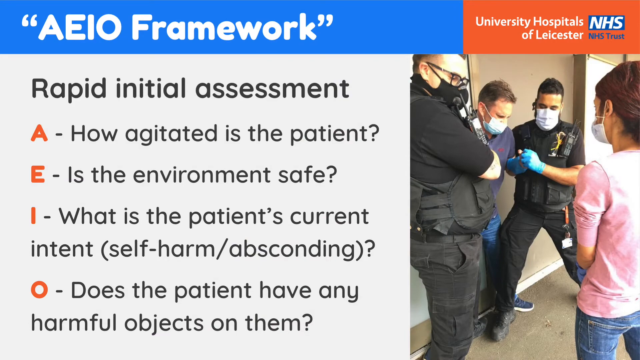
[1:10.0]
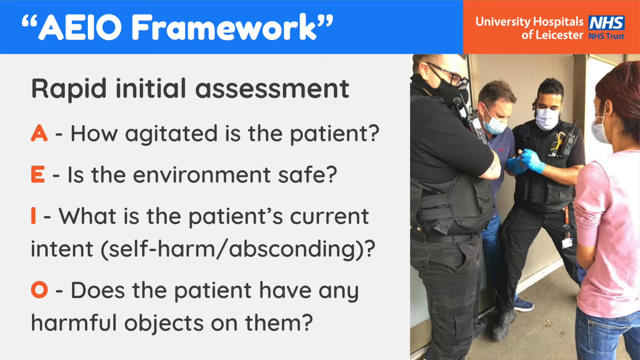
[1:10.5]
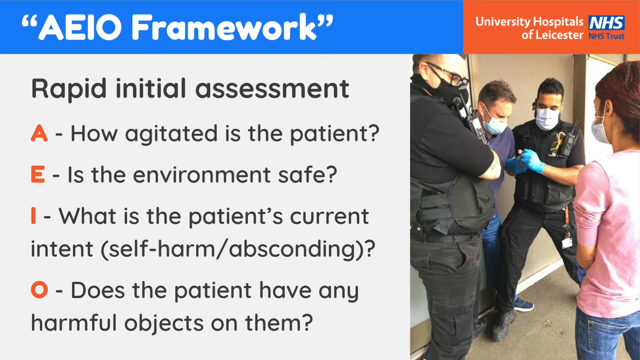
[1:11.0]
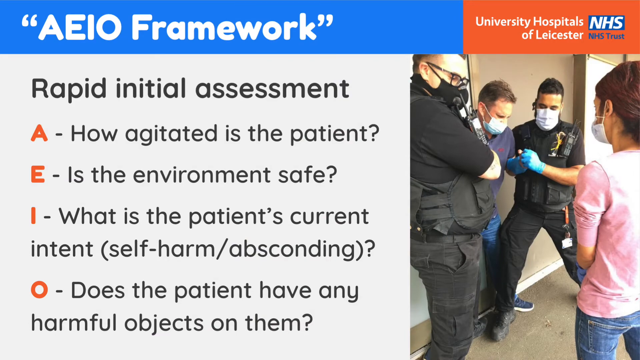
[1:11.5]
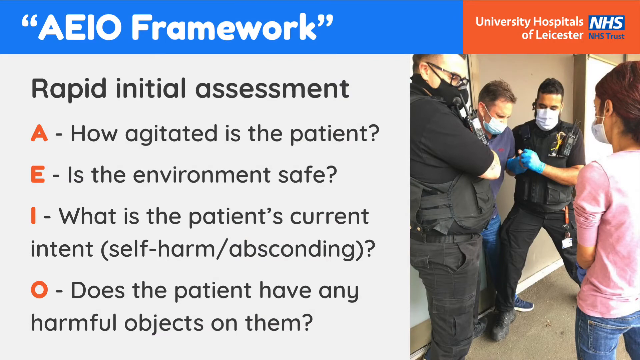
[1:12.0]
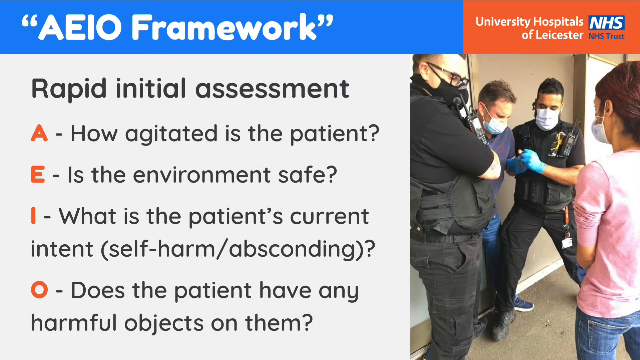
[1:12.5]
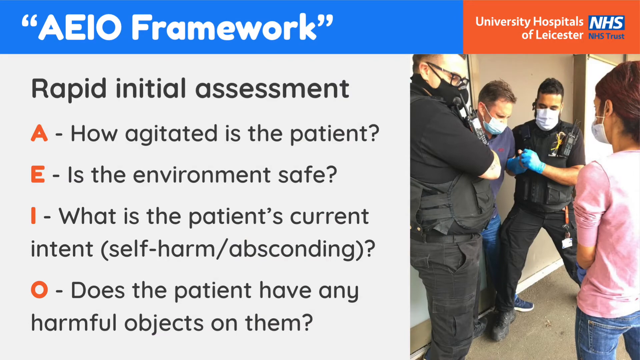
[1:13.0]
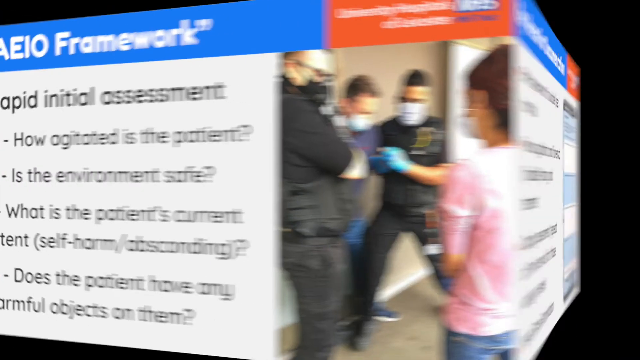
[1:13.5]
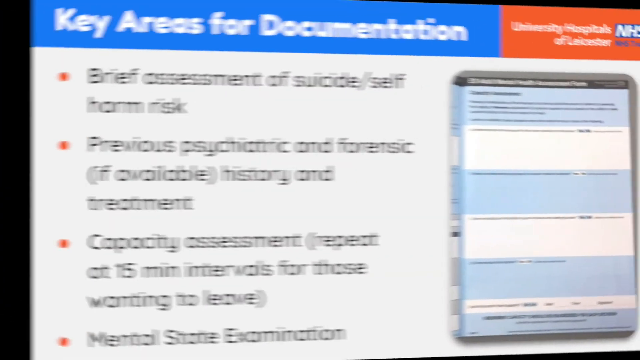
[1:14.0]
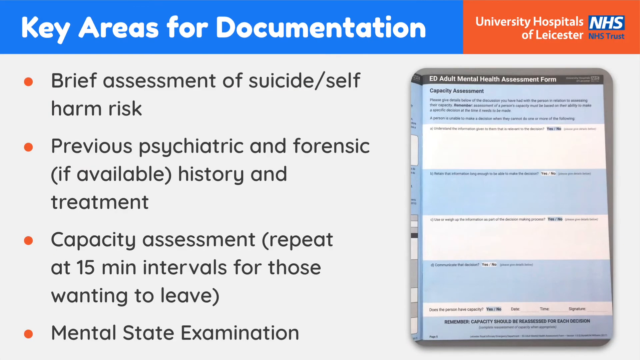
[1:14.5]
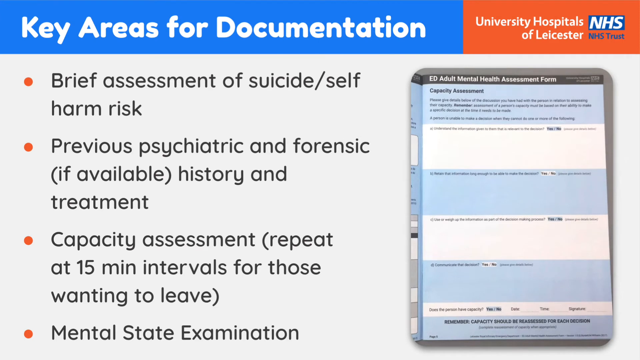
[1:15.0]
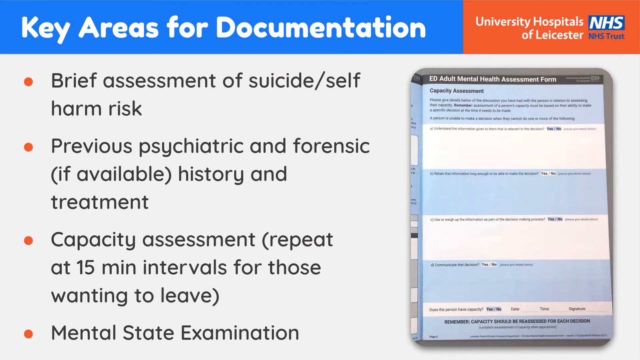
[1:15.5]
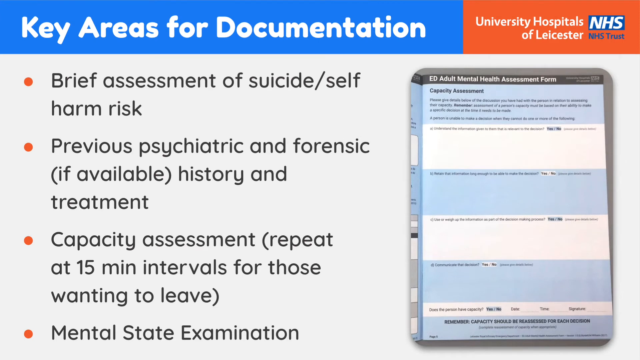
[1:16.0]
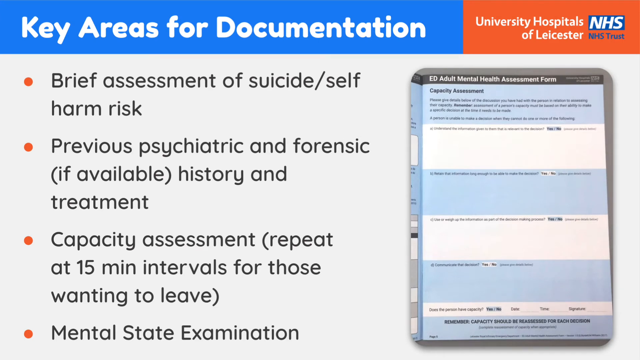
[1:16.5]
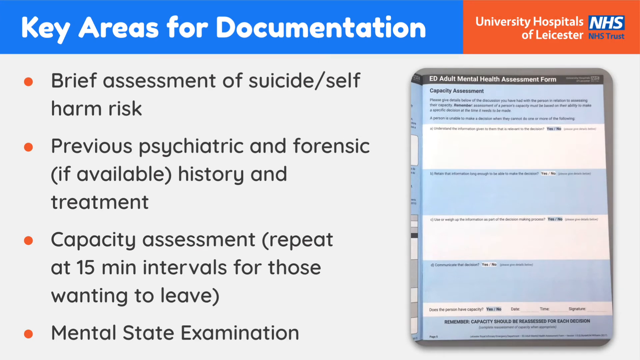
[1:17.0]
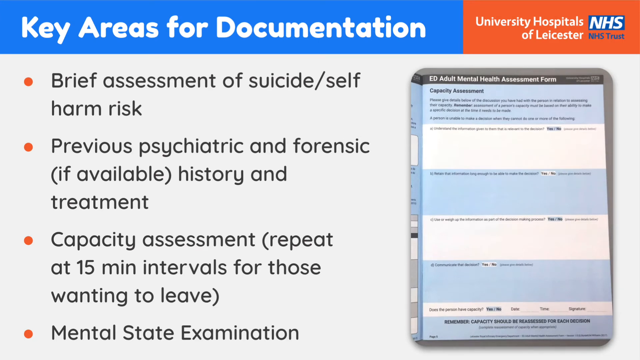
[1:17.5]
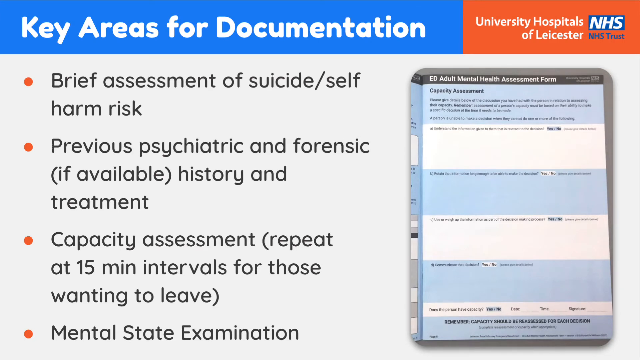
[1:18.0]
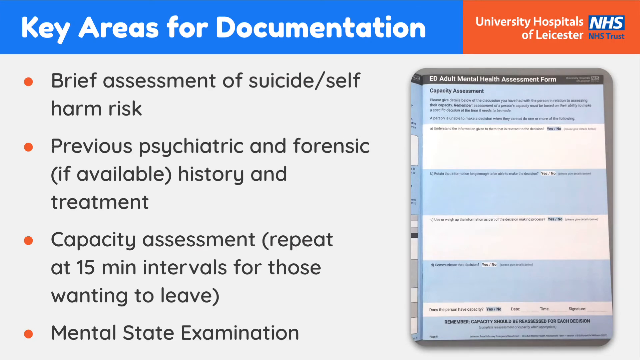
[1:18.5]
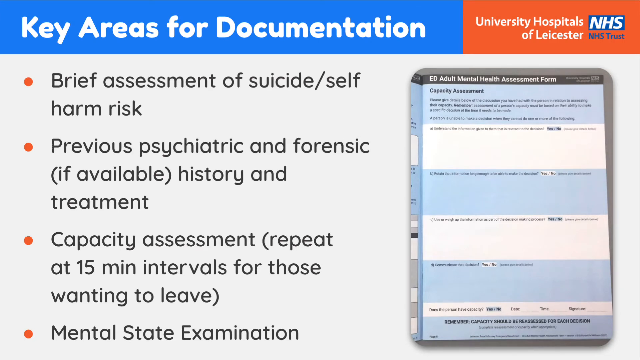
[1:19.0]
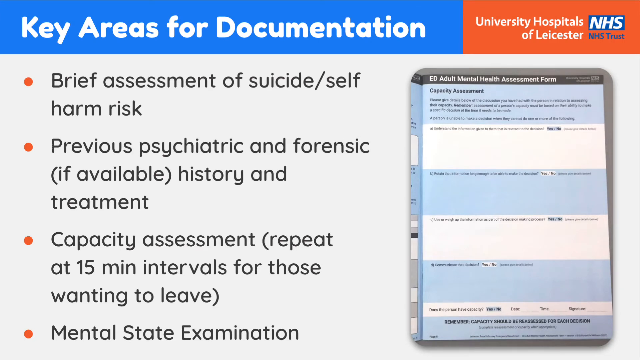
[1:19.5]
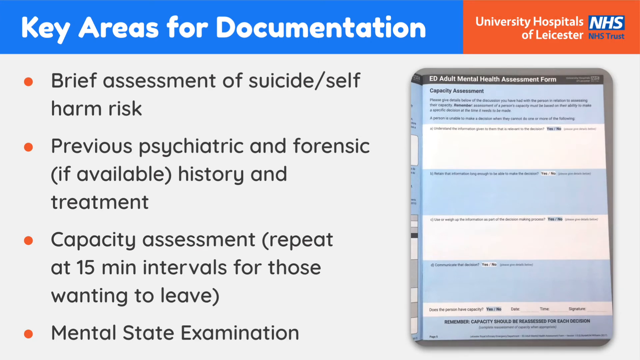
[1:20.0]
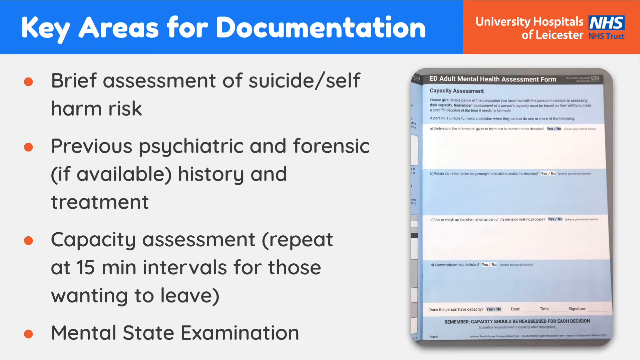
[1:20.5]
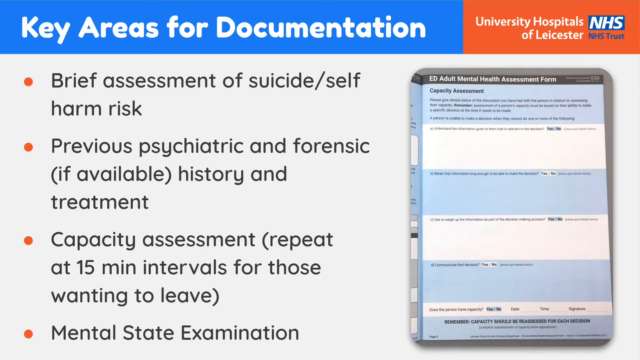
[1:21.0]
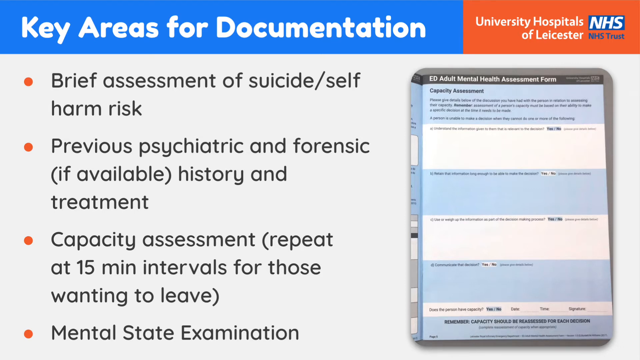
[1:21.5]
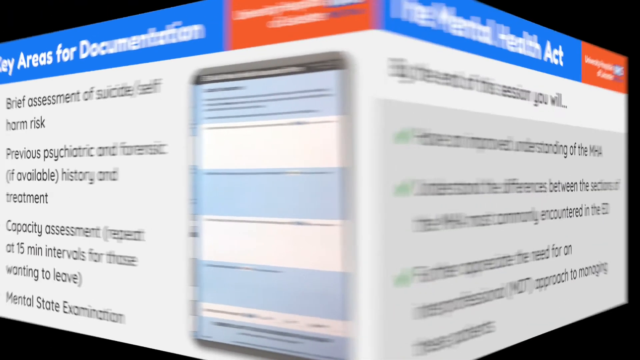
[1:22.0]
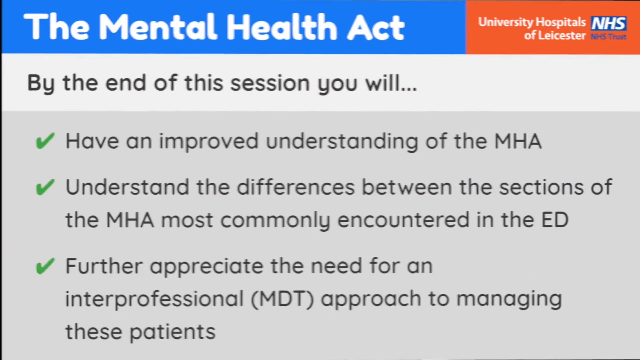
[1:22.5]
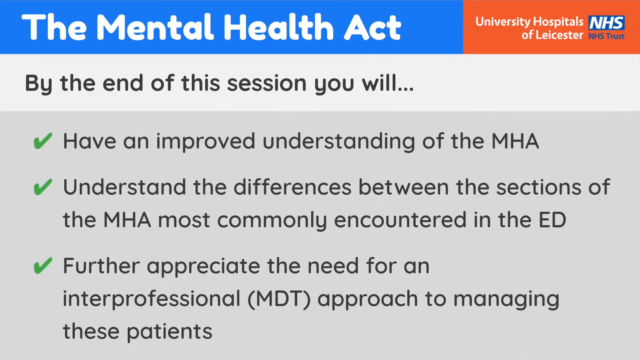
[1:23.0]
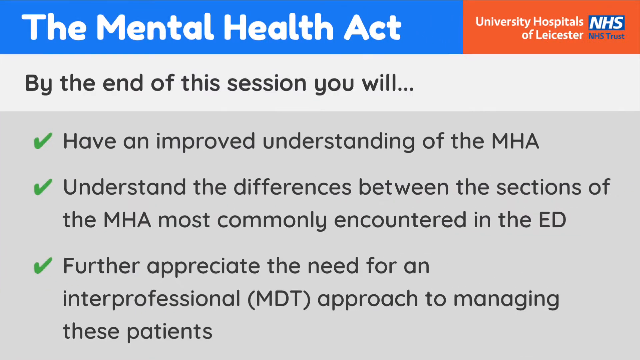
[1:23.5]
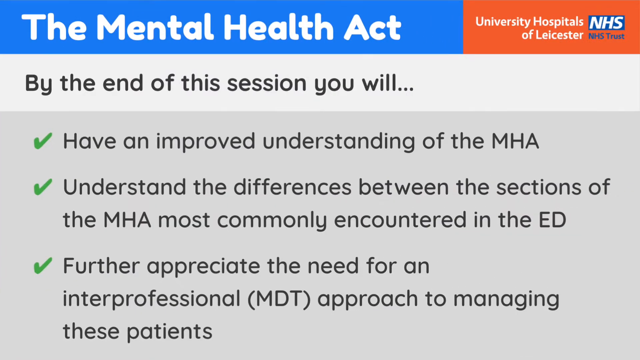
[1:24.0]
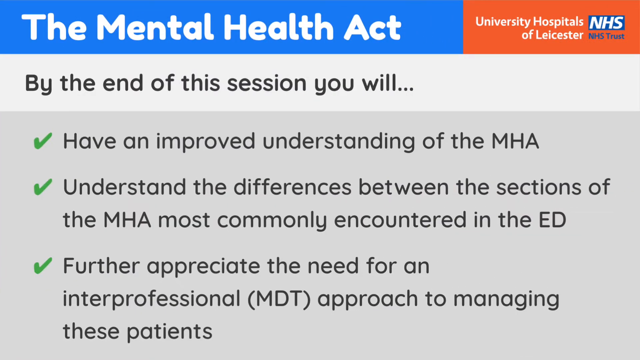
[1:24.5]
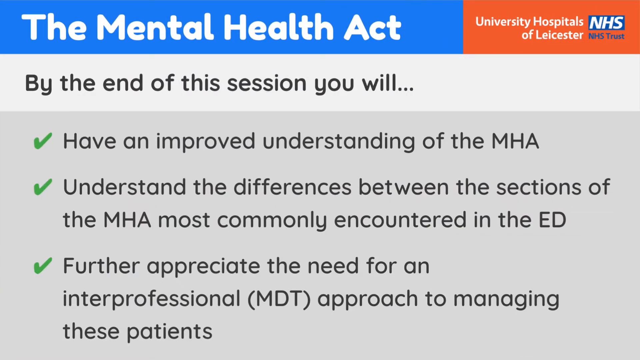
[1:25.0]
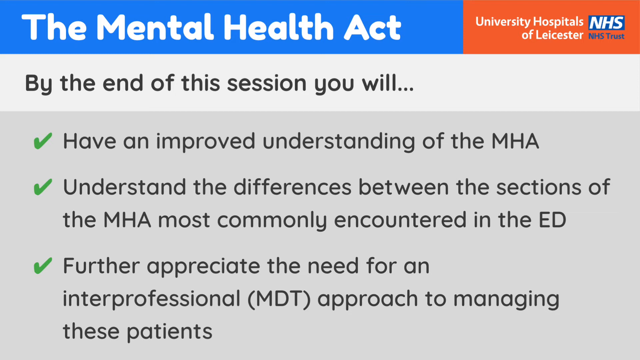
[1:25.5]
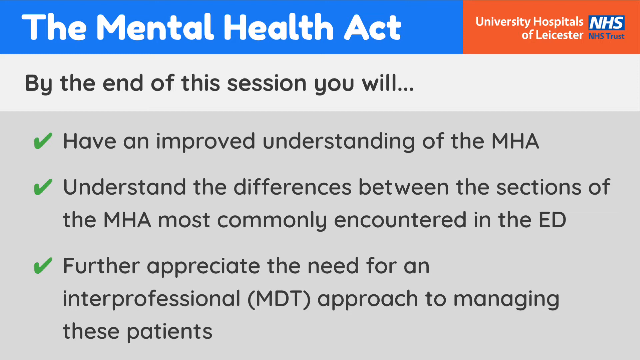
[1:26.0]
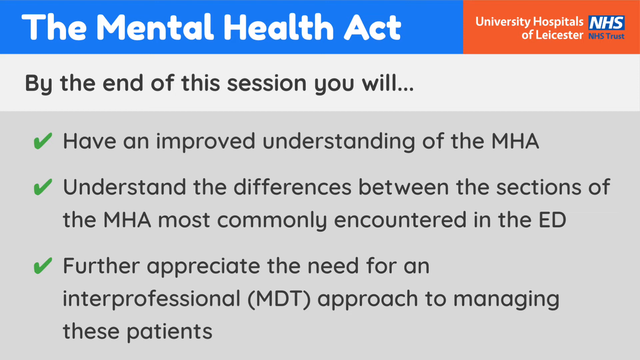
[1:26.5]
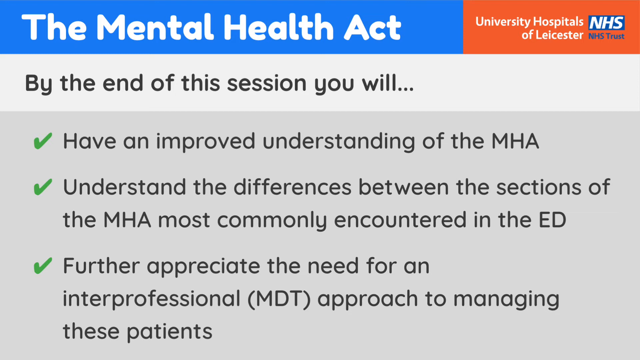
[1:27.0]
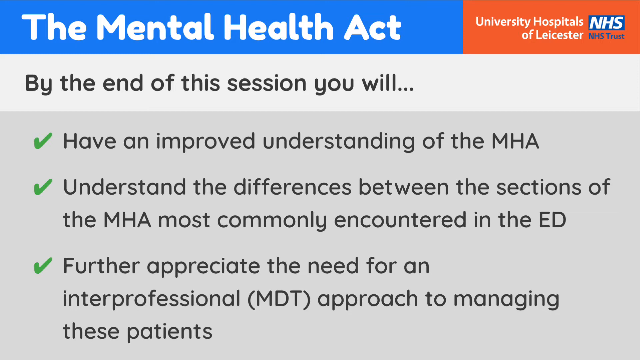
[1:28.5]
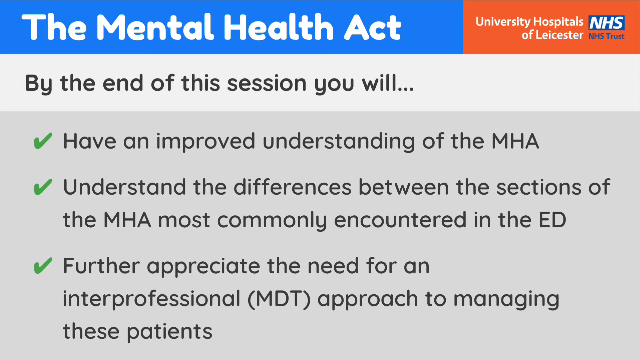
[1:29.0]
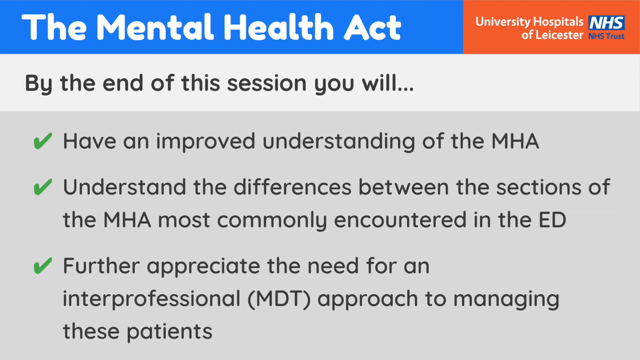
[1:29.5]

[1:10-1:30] A page shows the AEIO framework and rapid initial assessment, with a picture of two security guards holding down a patient; one of them apparently has a mask on, and a nurse or staff member in pink is speaking to the patient. A page titled "key areas for documentation" lists assessing self-harm risk, previous psychiatric history, capacity, and a repeat at 15-minute intervals for those who want to leave, with a small chart on the right-hand side that is like a tablet with some writing. Another page lists what participants will be able to do at the end of the session: have an improved understanding of MHA, understand the differences between that and what is commonly encountered in the ED, and appreciate the need for an interpersonal approach to managing these patients. The rapid initial assessment spells out the word "rapid" vertically, with what each letter stands for explained horizontally.